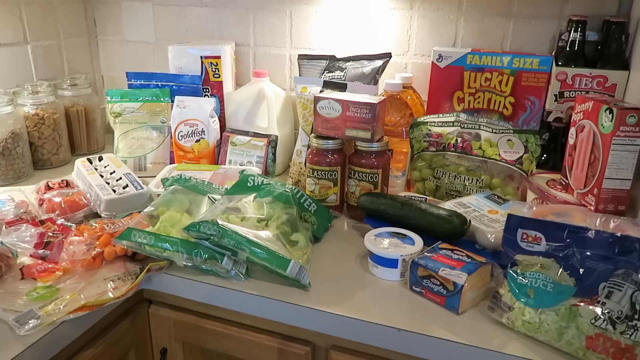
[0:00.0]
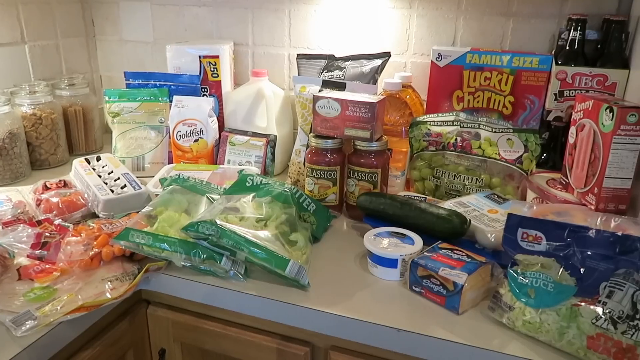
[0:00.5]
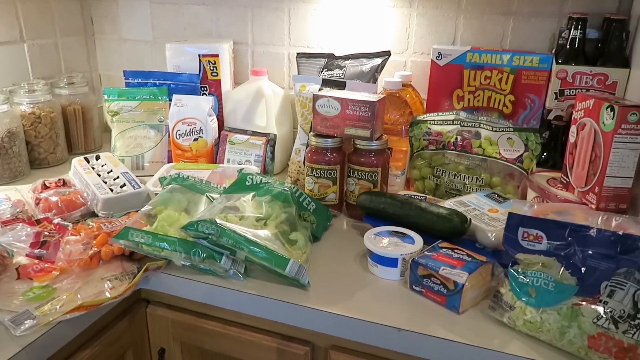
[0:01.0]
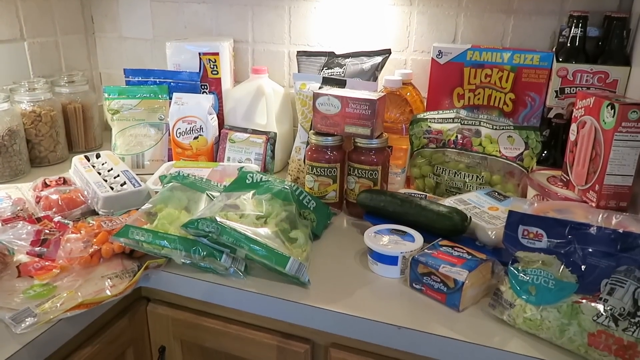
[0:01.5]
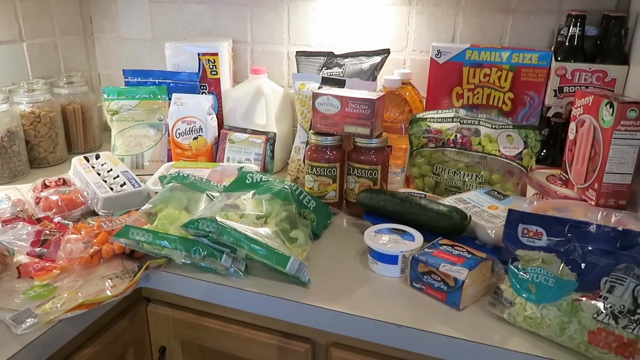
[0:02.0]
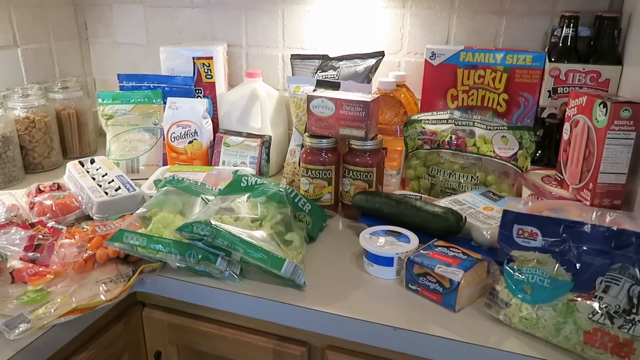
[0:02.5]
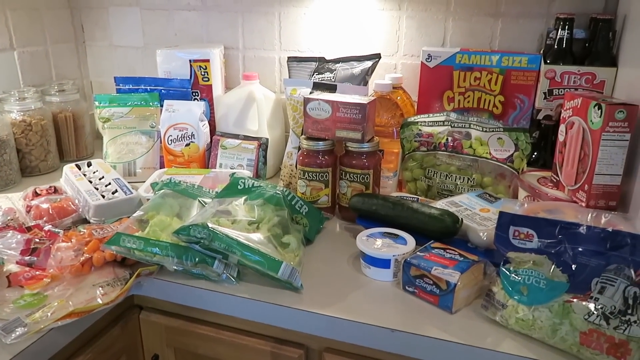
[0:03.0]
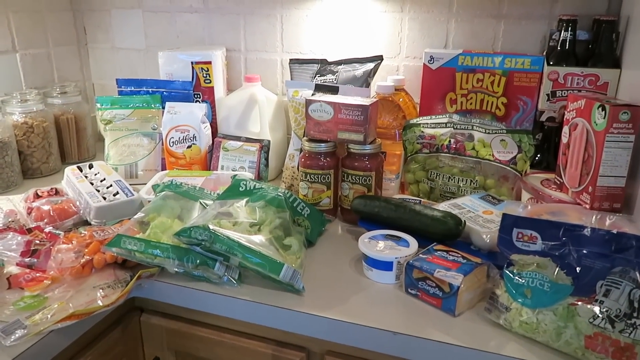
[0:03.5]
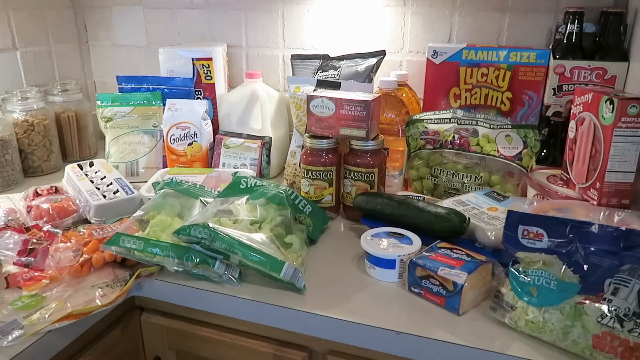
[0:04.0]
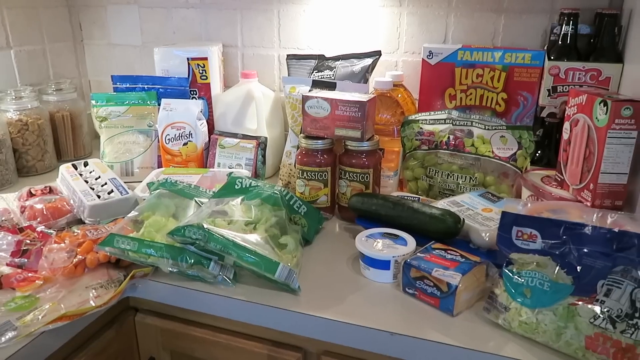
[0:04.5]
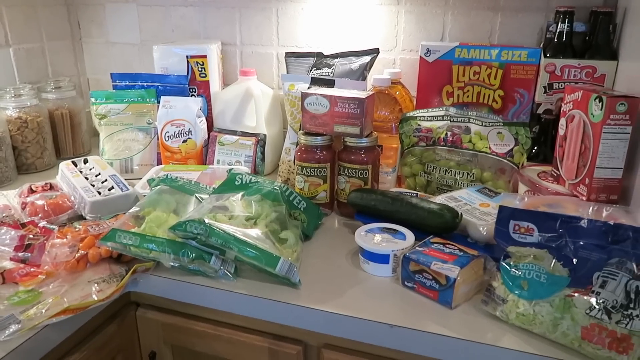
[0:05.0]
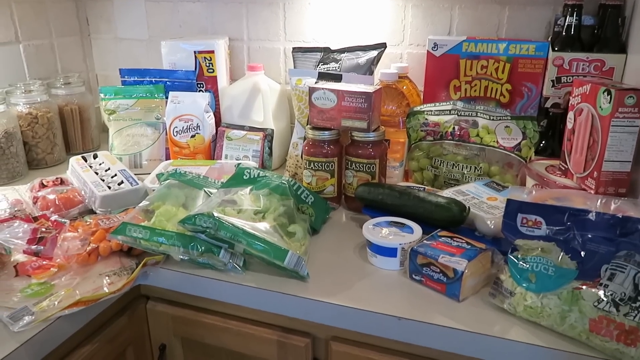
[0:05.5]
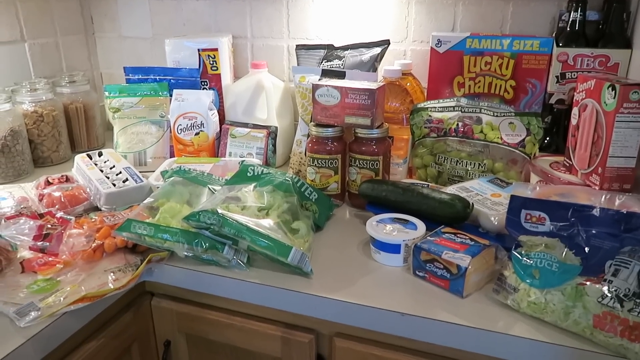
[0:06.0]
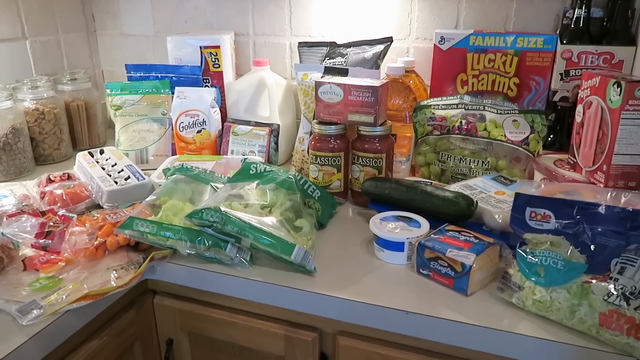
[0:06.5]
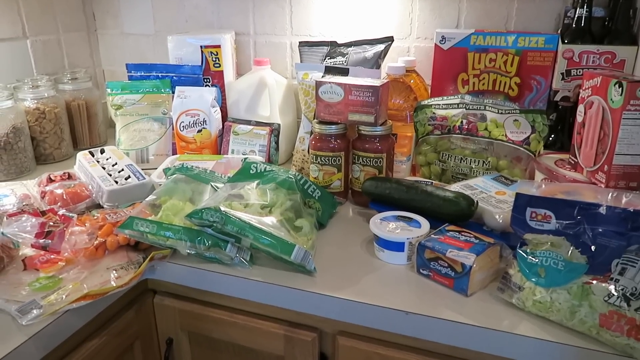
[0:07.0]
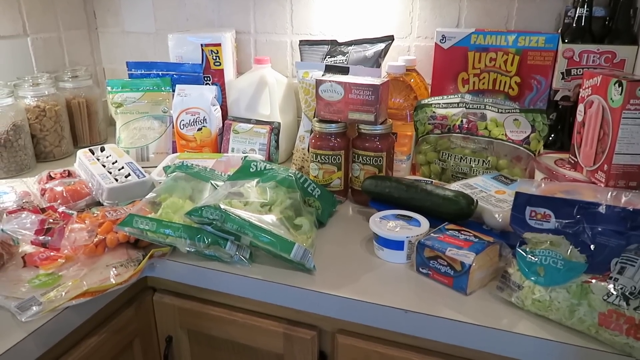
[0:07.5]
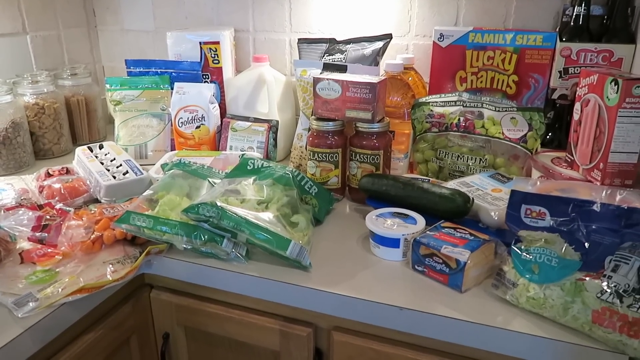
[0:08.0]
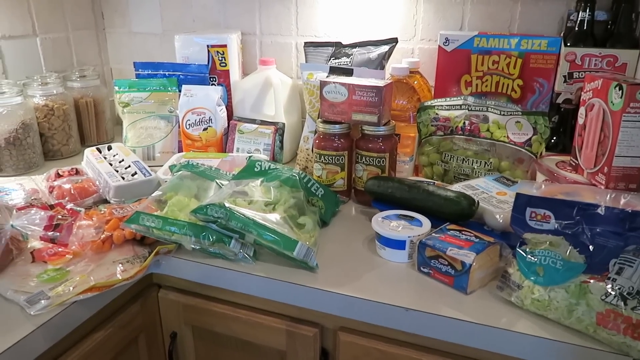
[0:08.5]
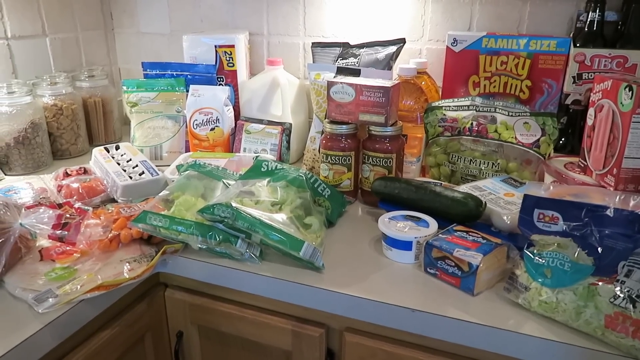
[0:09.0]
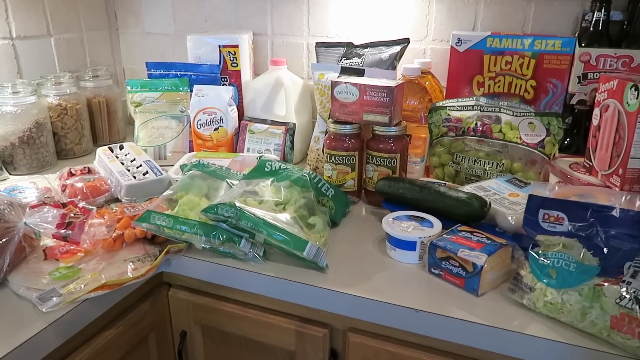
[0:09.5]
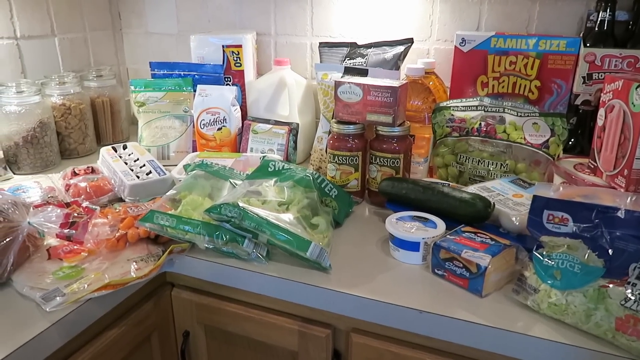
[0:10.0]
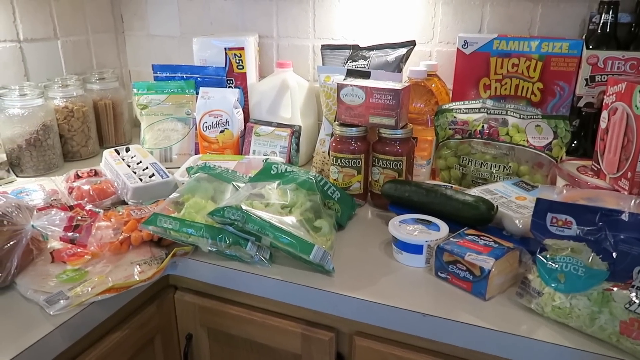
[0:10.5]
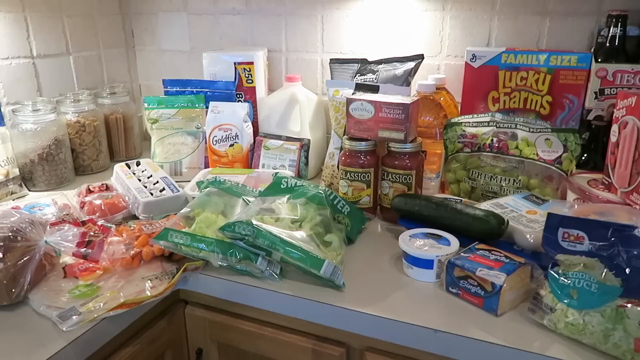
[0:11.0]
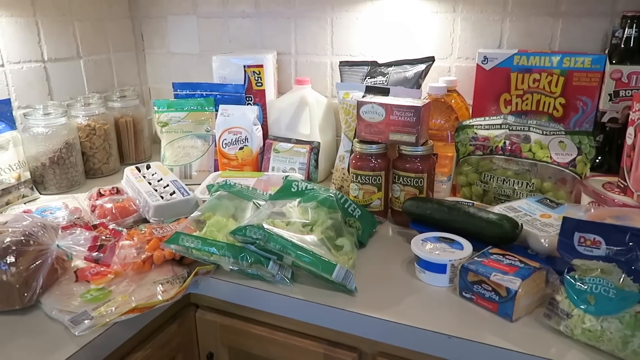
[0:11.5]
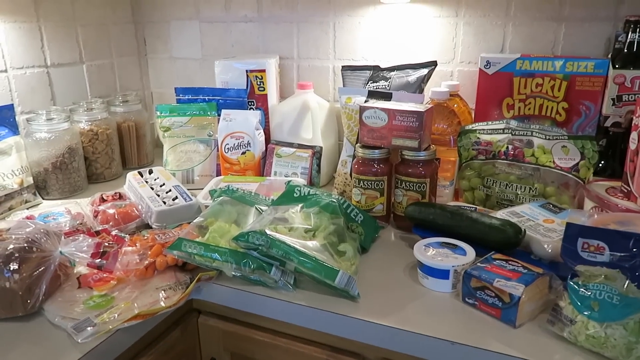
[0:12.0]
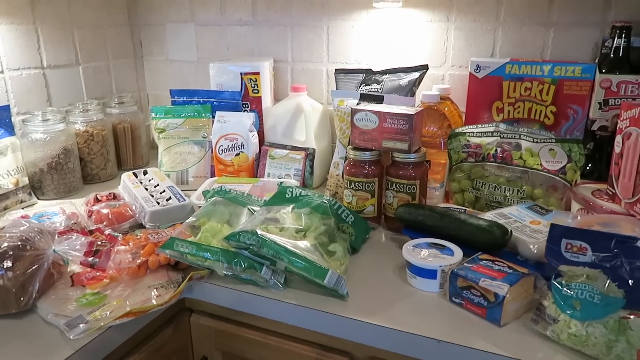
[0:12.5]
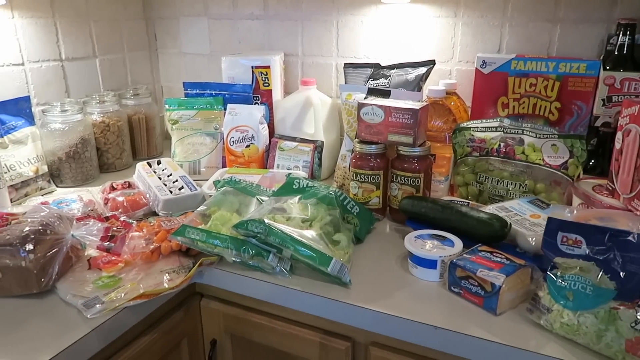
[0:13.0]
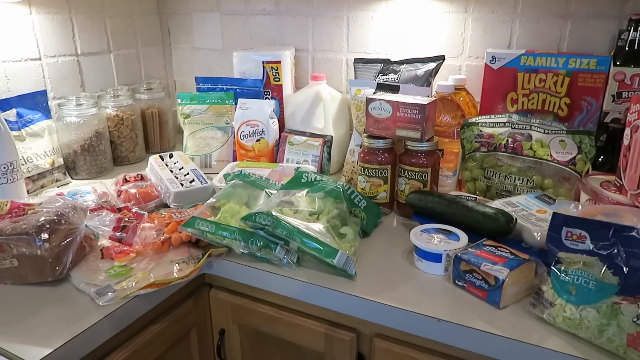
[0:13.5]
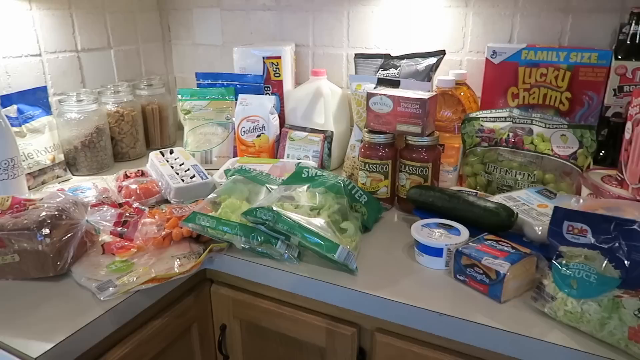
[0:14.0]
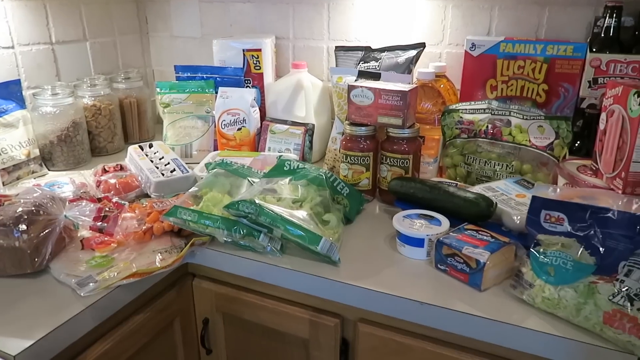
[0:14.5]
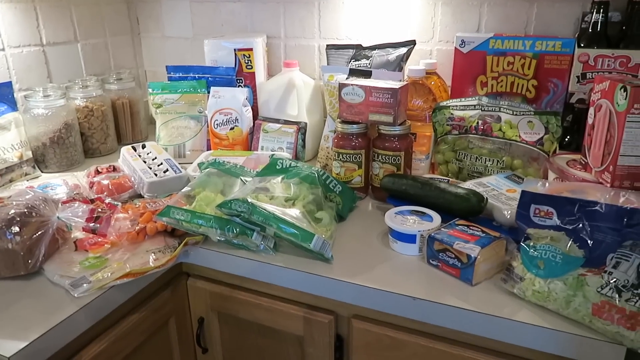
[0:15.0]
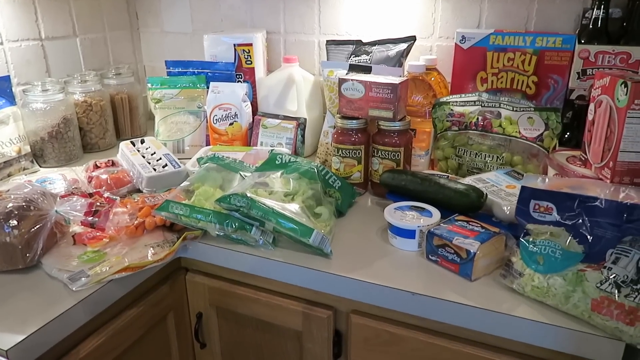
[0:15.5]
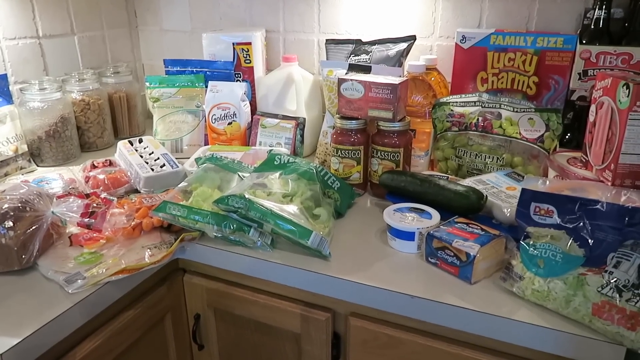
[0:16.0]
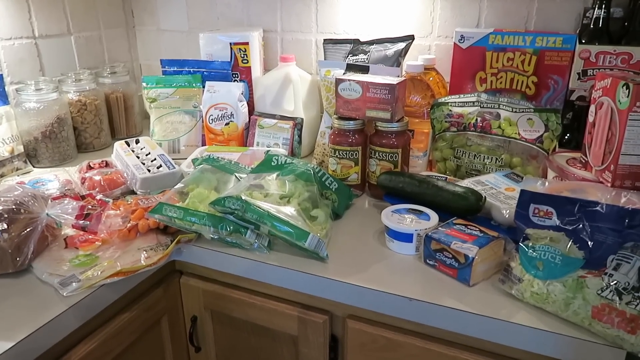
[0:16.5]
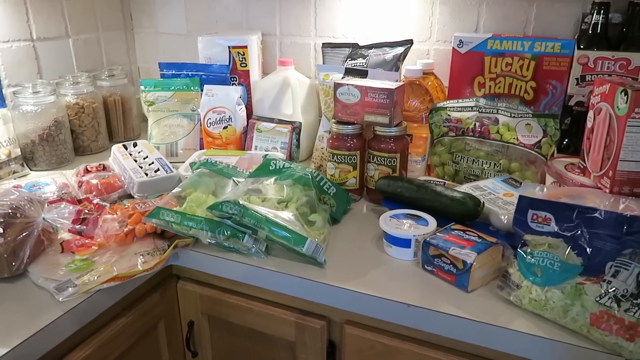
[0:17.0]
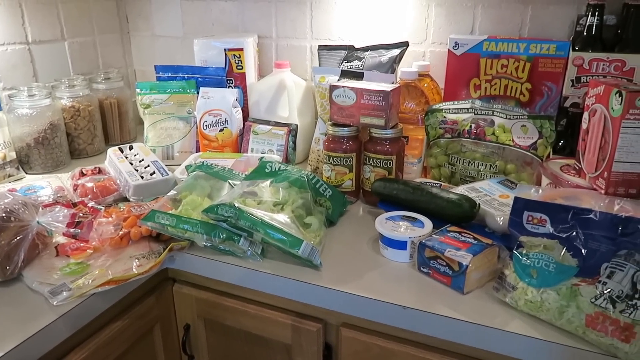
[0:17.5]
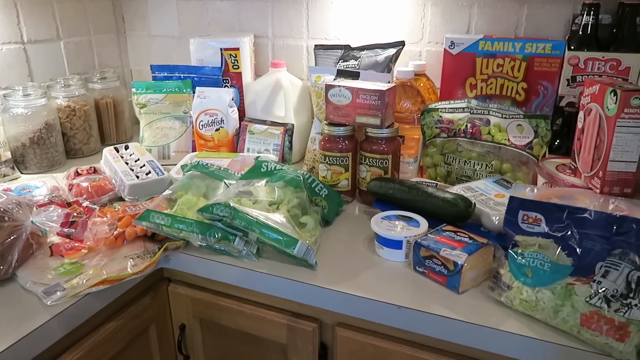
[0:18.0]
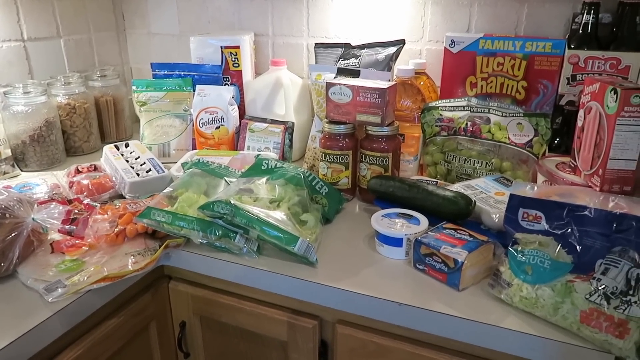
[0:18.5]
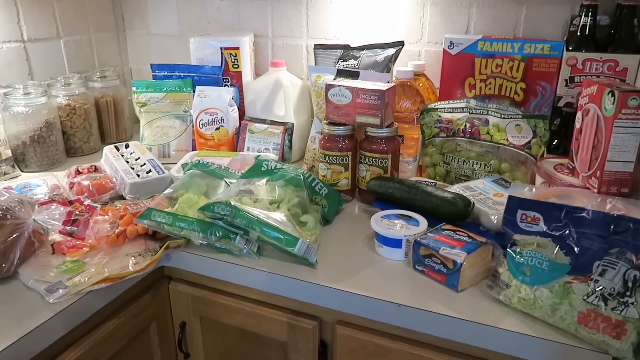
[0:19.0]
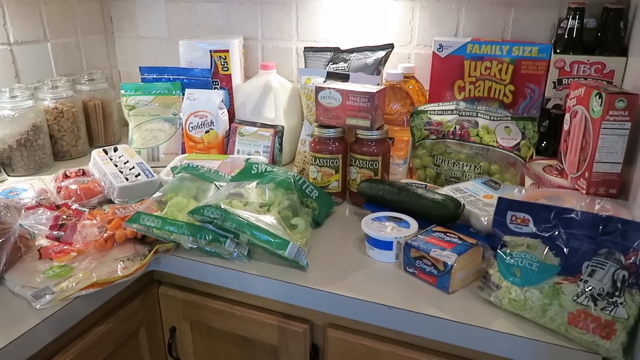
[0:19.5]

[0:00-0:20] The scene opens on what seems to be a kitchen worktop with light coming from overhead. A range of items is spread across it, looking like groceries someone has unpacked and needs to put away: a large container of milk, a package of goldfish, some bags of lettuce, carrots, a box of eggs, possibly some very small peppers, two jars of pasta sauce, English breakfast tea, two containers of what looks like oil, some root beer, and a large family-sized box of Lucky Charms. It appears to be an American grocery shop. The camera is slightly wobbly as it films, giving the scene a homemade appearance, and it does not cut away.